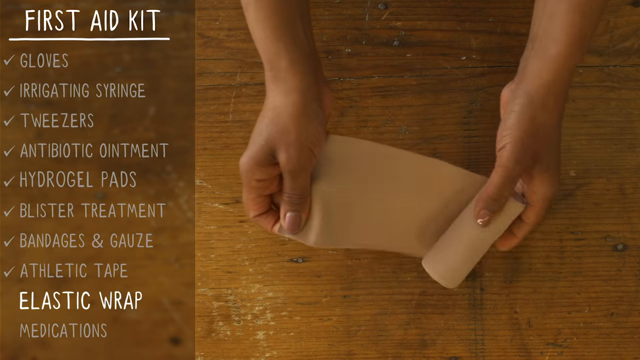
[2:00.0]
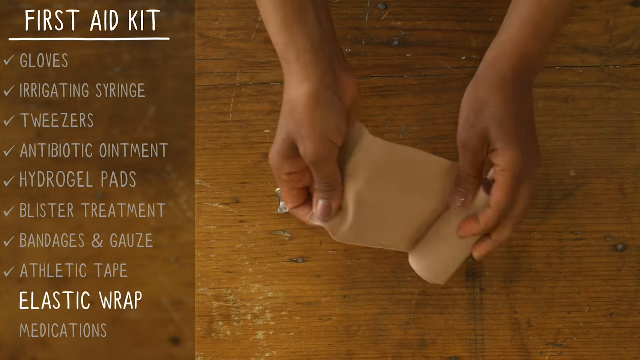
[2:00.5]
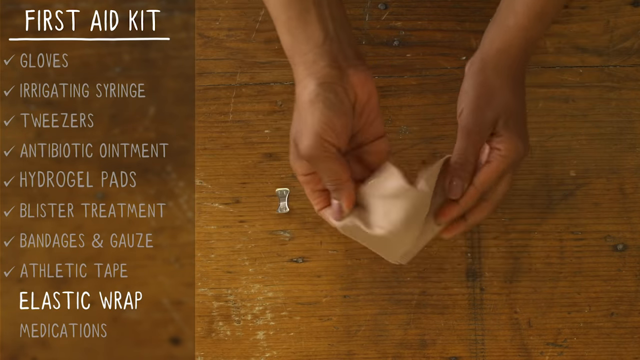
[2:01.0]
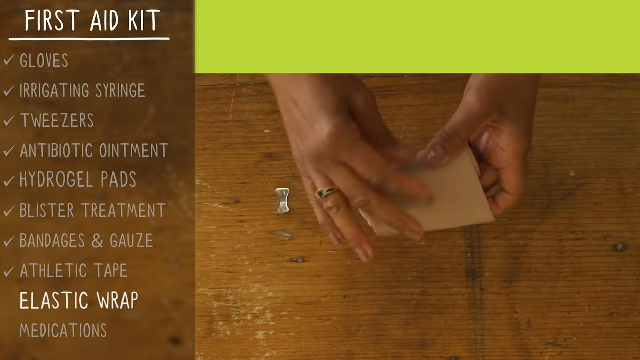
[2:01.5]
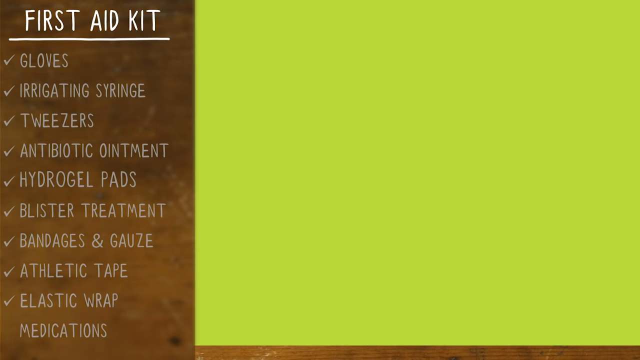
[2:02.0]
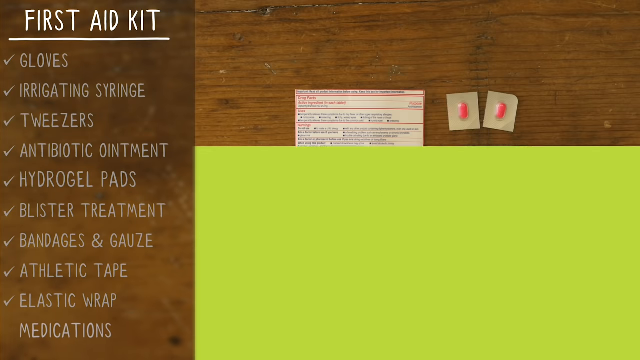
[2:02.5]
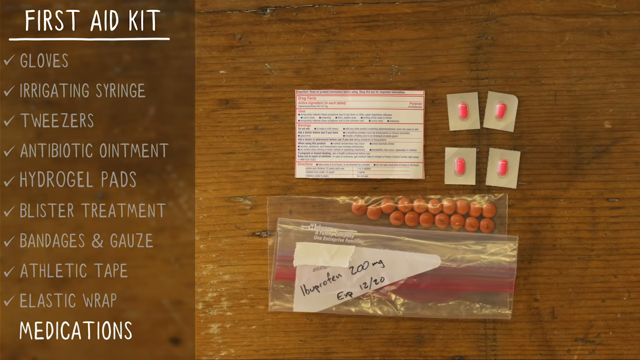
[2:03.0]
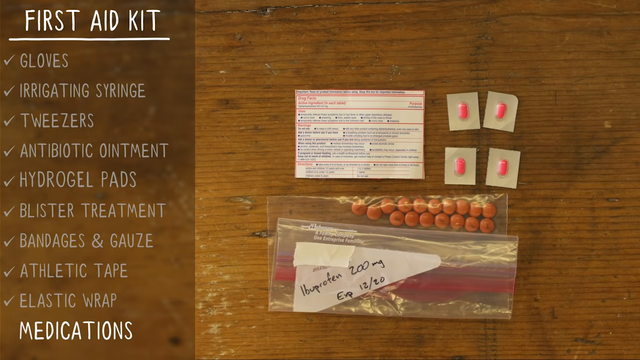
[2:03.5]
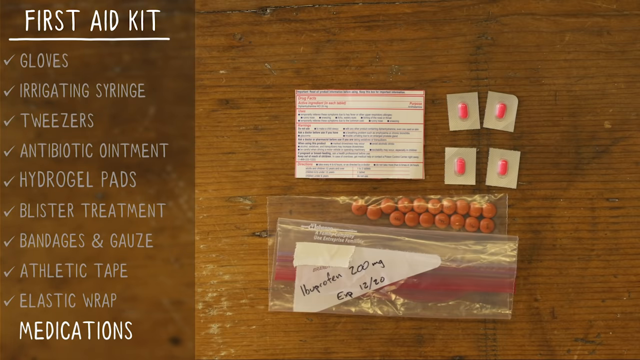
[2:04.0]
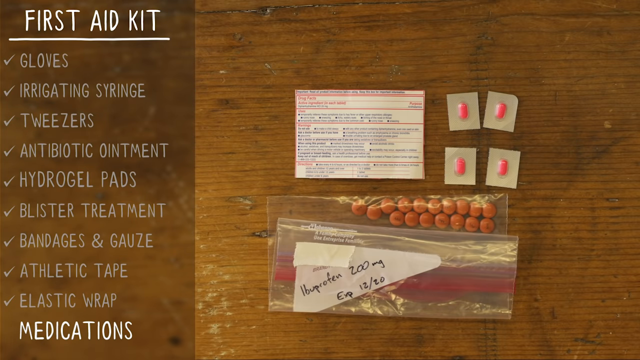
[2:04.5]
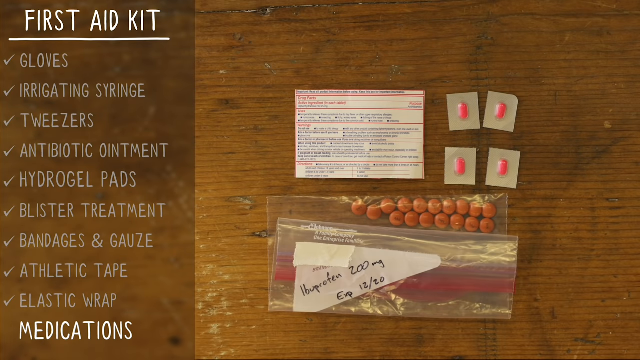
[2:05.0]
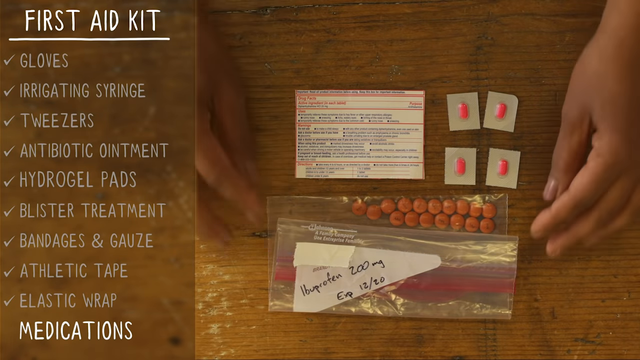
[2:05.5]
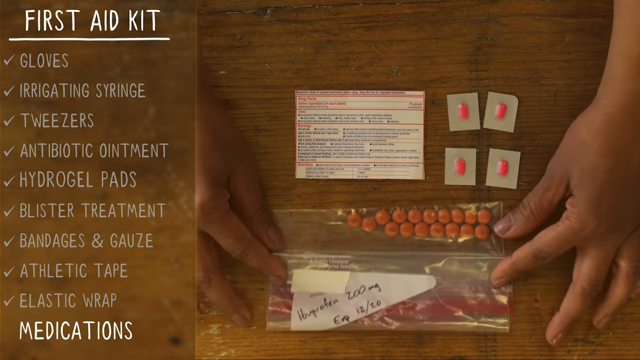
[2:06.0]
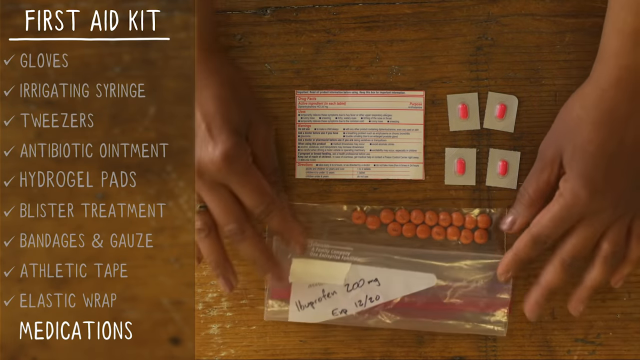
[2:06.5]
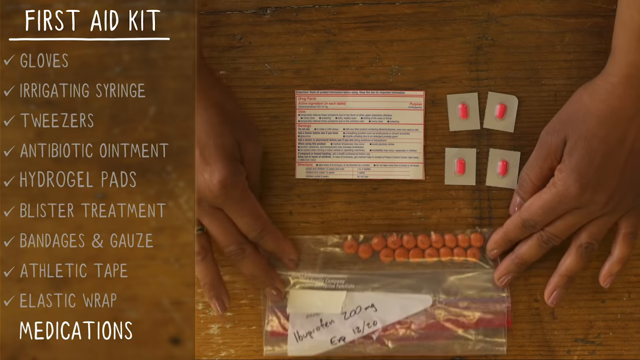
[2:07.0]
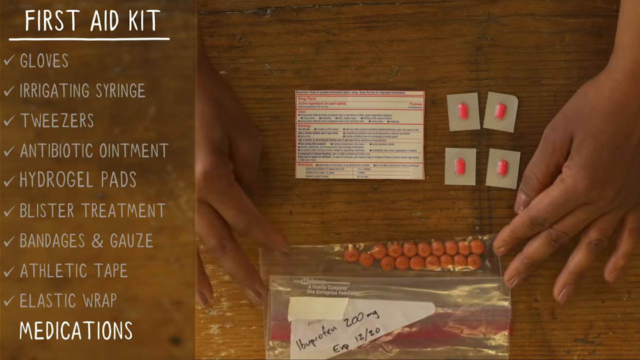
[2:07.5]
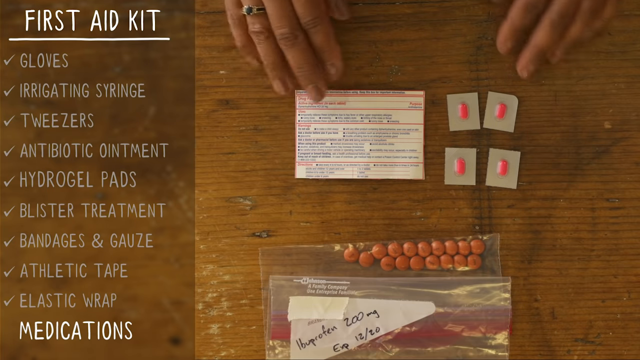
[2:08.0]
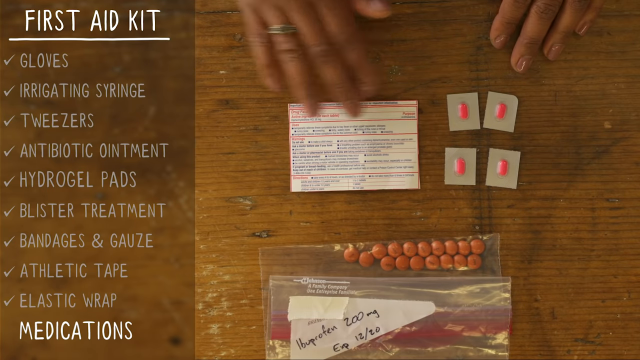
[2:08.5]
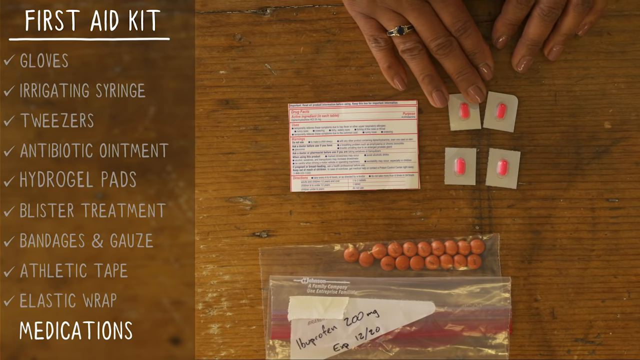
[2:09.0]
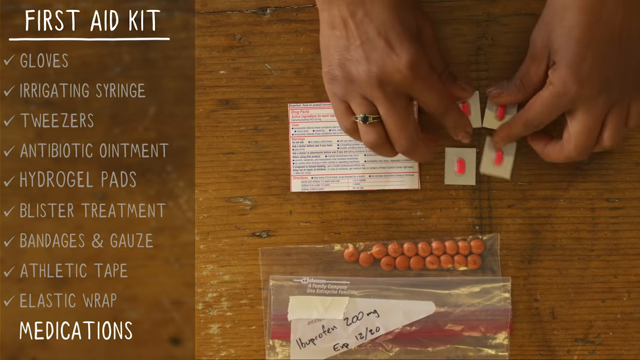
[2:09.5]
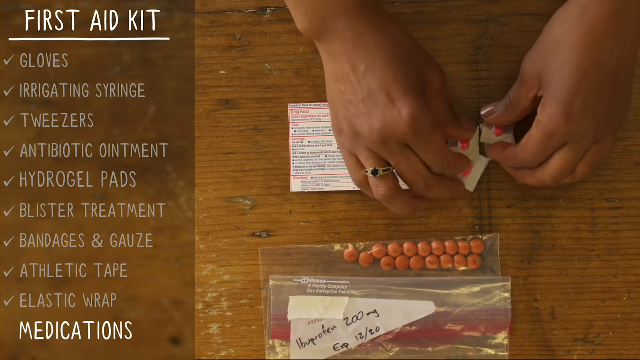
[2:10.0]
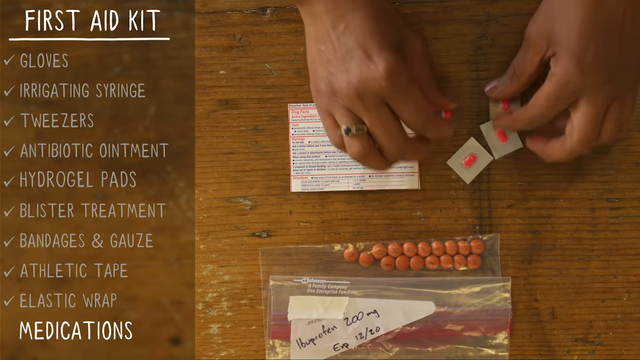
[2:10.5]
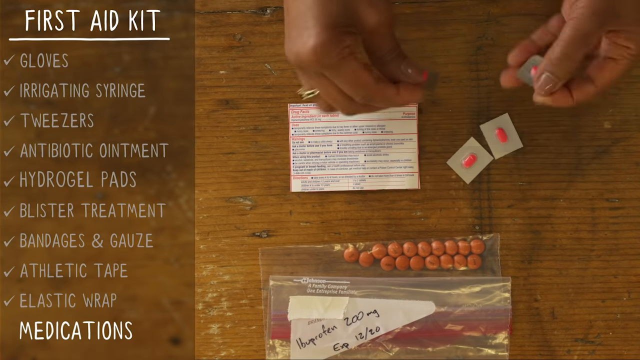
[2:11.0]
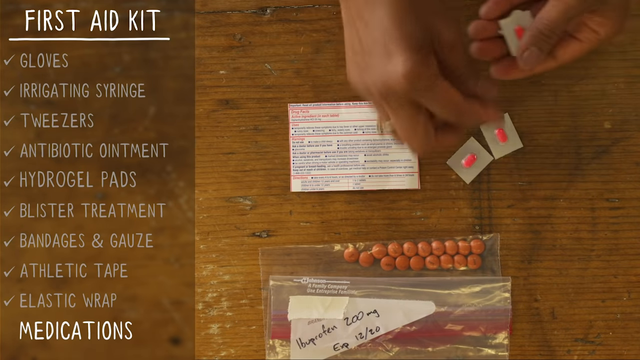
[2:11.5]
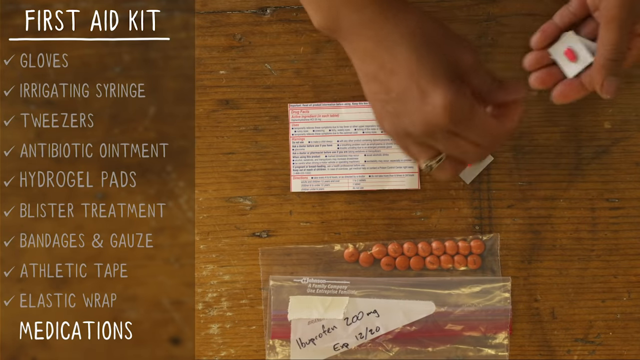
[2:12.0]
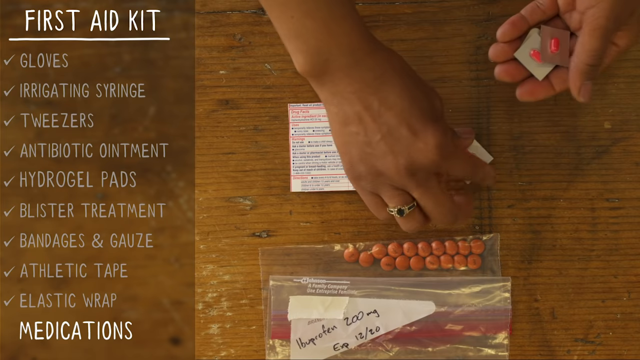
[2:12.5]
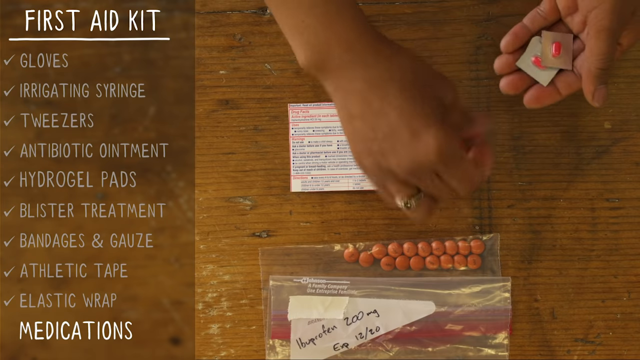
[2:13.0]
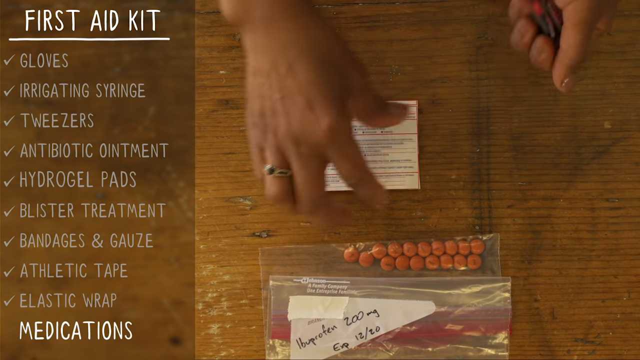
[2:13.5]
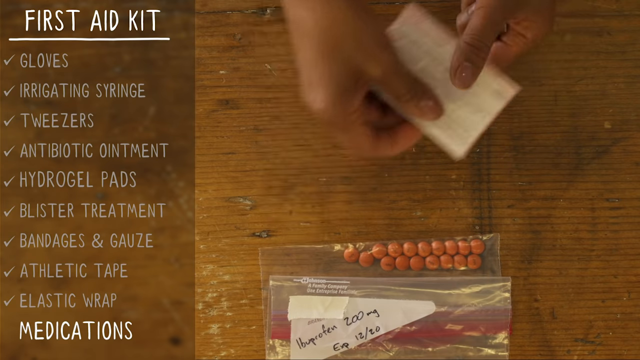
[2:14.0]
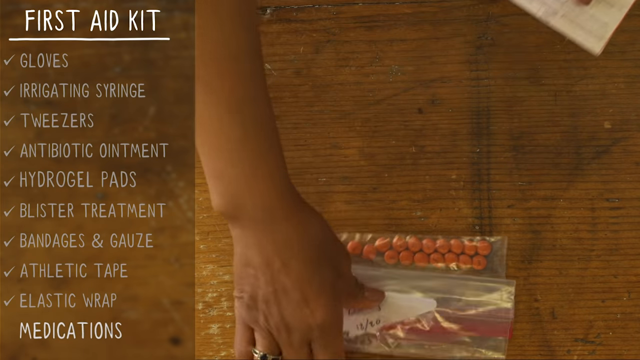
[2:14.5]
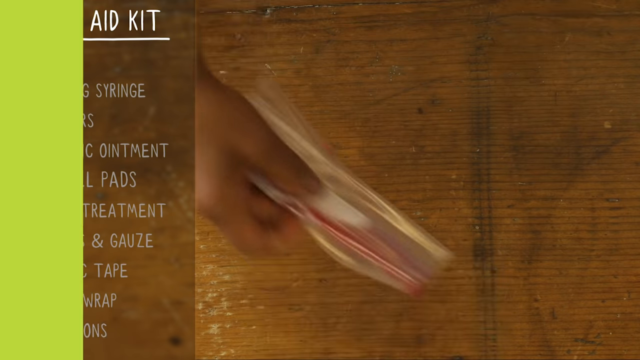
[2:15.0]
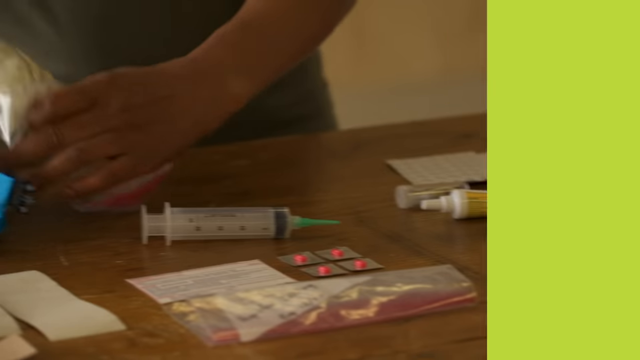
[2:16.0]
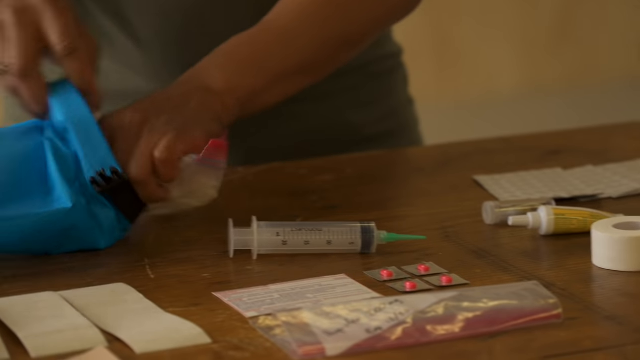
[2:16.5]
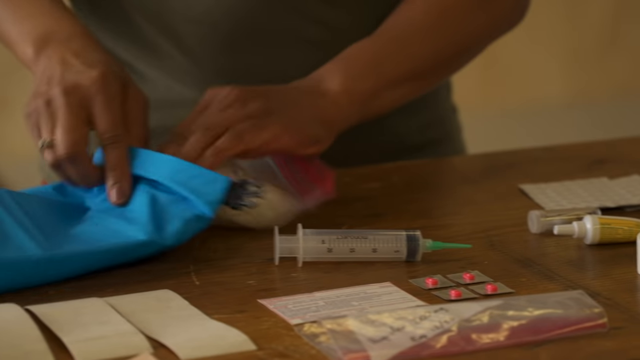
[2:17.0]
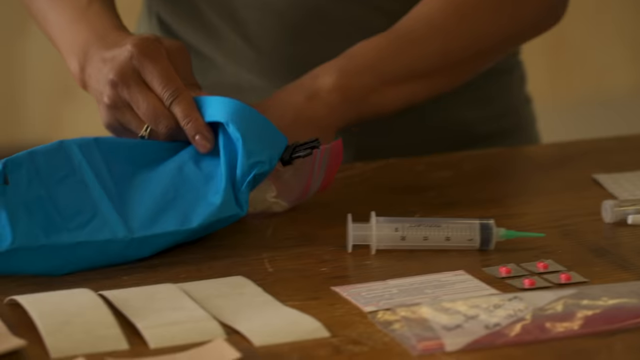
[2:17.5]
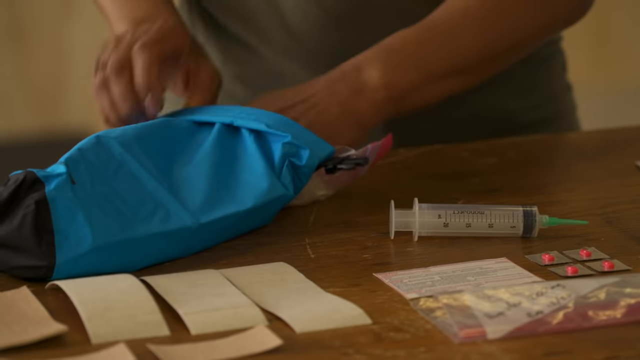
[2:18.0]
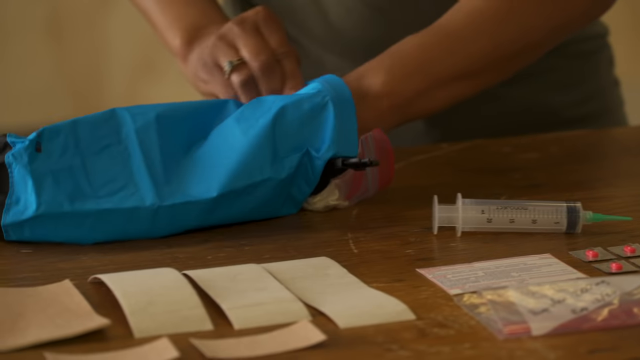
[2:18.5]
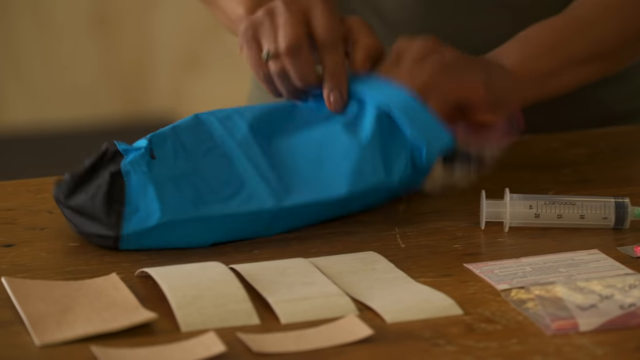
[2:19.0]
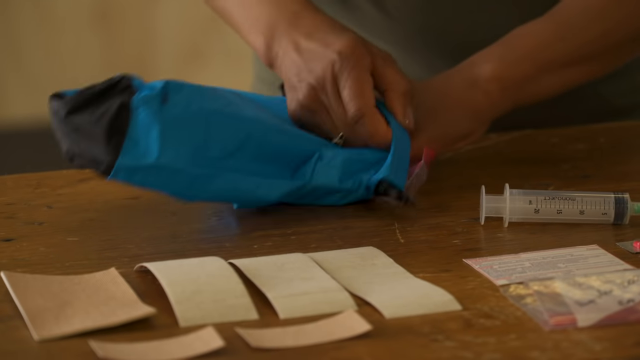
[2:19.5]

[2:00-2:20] On the left side of the screen, a list in white uppercase letters reads "first aid kit, gloves, irrigating syringe, tweezers, antibiotic ointment, hydrogel pads, blister treatment, bandages and gauze, athletic tape, elastic wrap, and medications". To the right of the list is a large brown wooden table, with an African American girl's hands in view. She holds a roll of elastic wrap, unrolls it and stretches it out, then rolls it back up tightly. The scene cuts to various medications sitting on the brown tabletop: four sealed Benadryl tablets along with a rectangular cutout of the back of the Benadryl box showing the warnings, directions for use and drug facts. Below this is a folded-up Ziploc baggie filled with loose ibuprofen tablets, with "ibuprofen 200 milligrams expires December 2020" written in black sharpie on the bag.